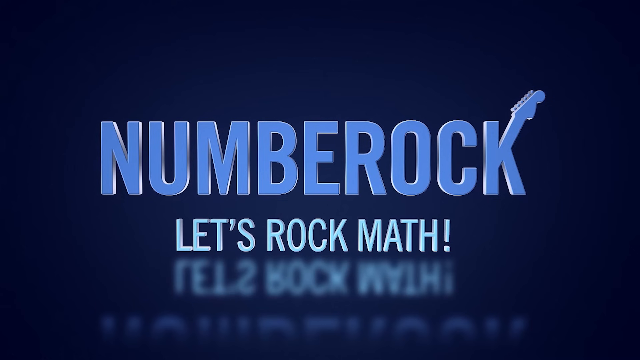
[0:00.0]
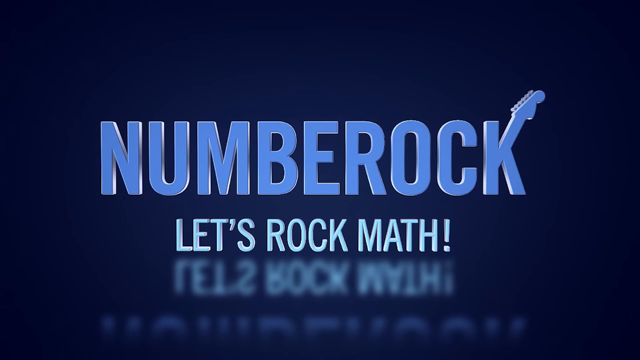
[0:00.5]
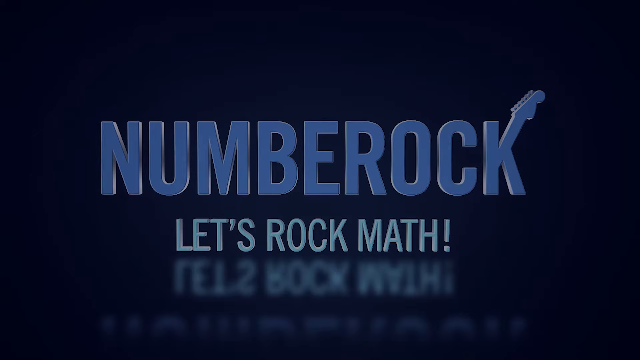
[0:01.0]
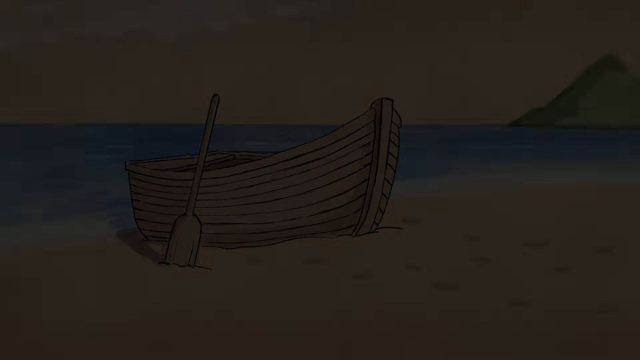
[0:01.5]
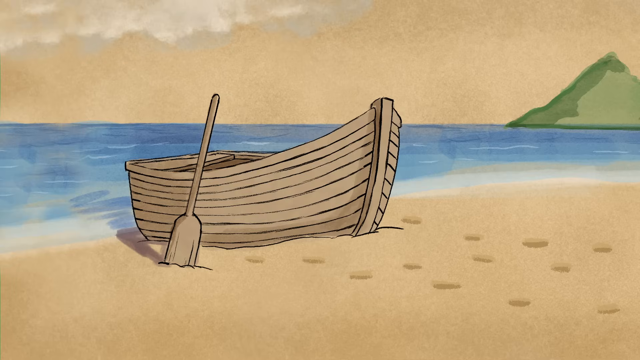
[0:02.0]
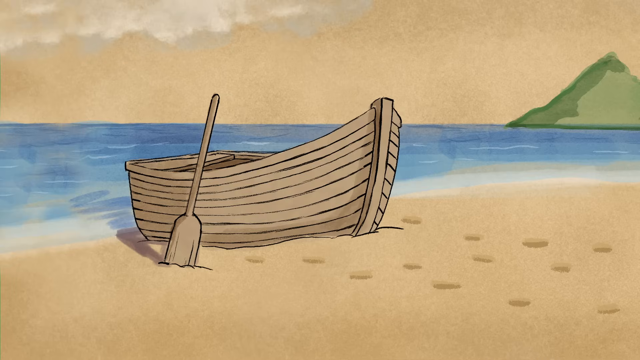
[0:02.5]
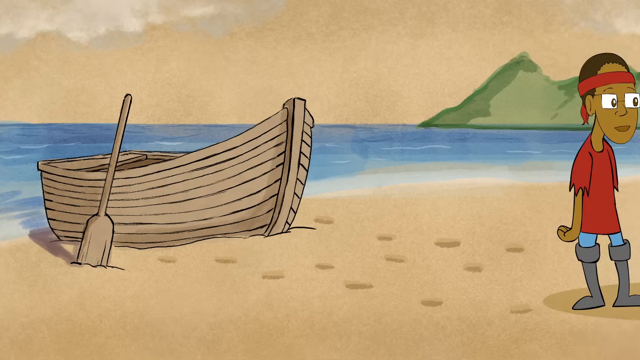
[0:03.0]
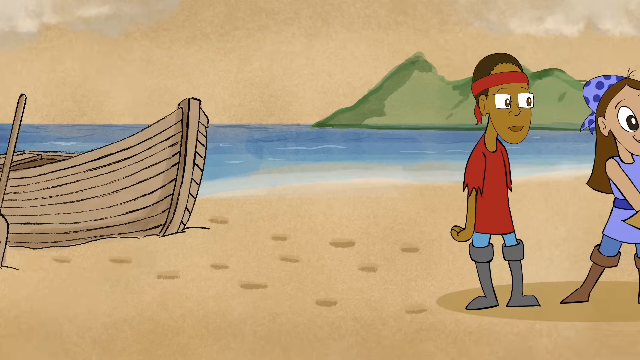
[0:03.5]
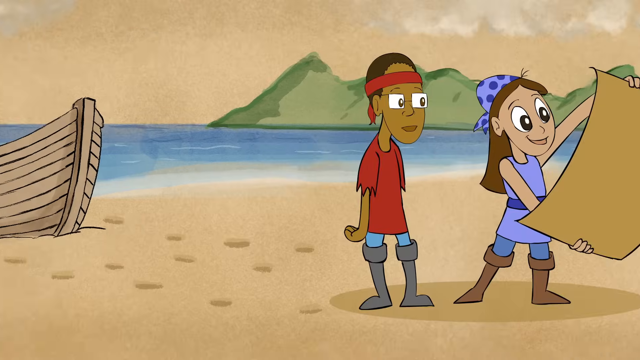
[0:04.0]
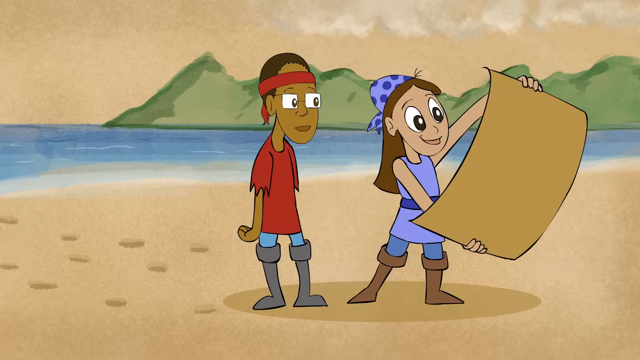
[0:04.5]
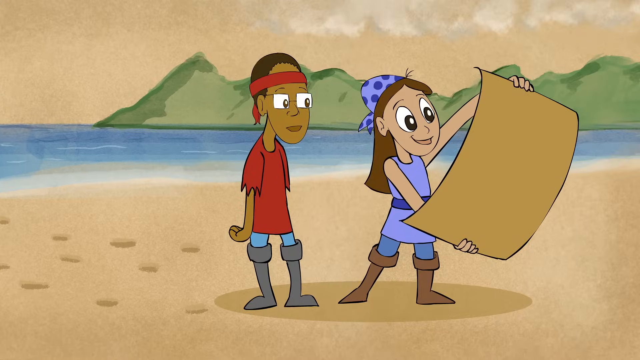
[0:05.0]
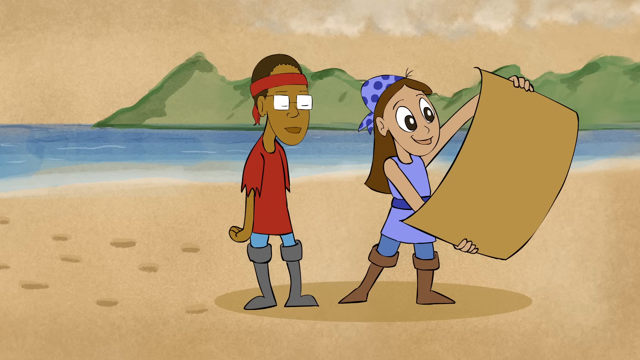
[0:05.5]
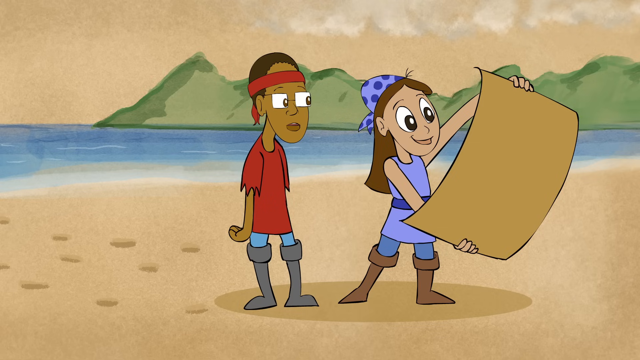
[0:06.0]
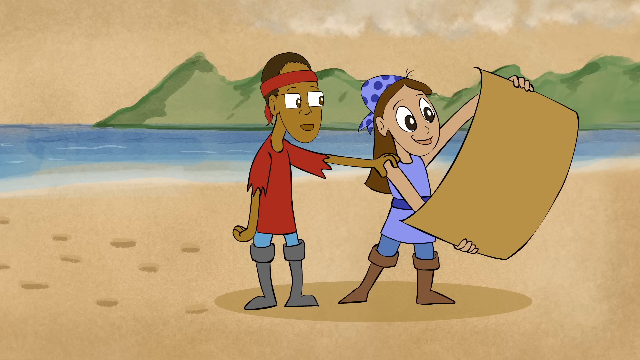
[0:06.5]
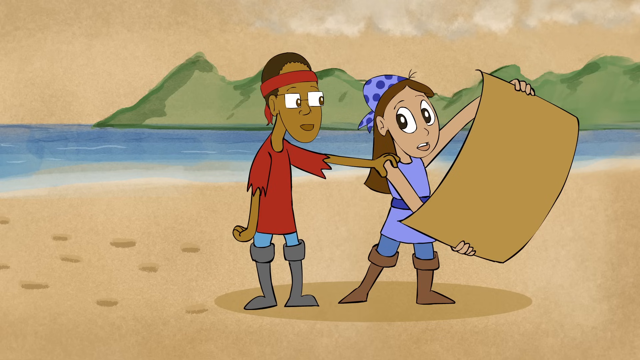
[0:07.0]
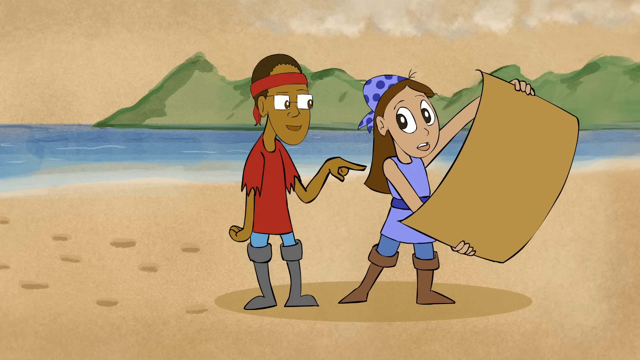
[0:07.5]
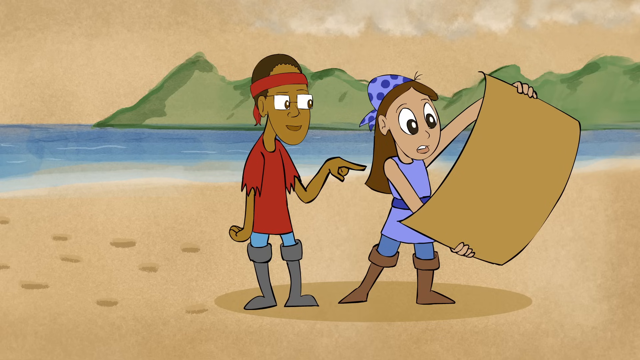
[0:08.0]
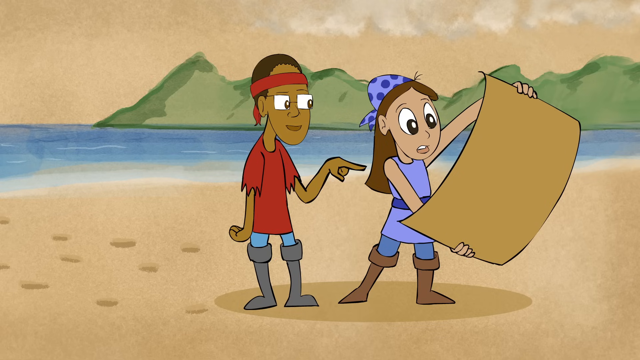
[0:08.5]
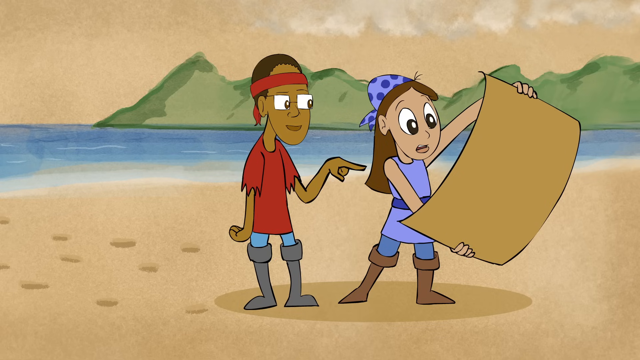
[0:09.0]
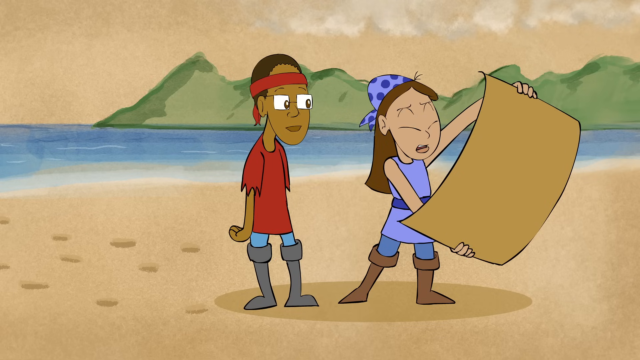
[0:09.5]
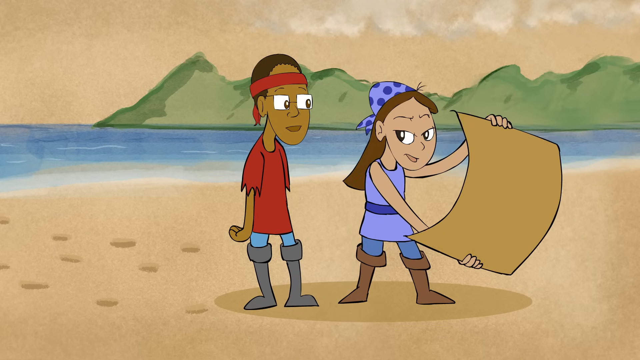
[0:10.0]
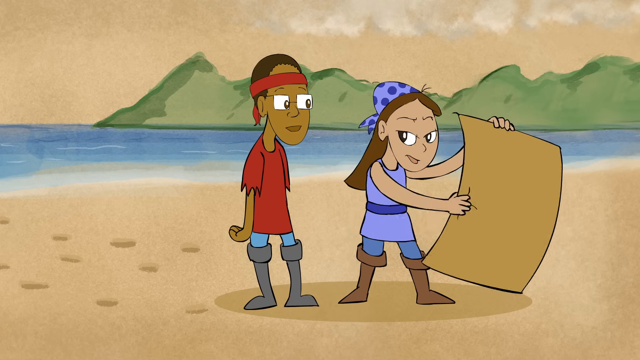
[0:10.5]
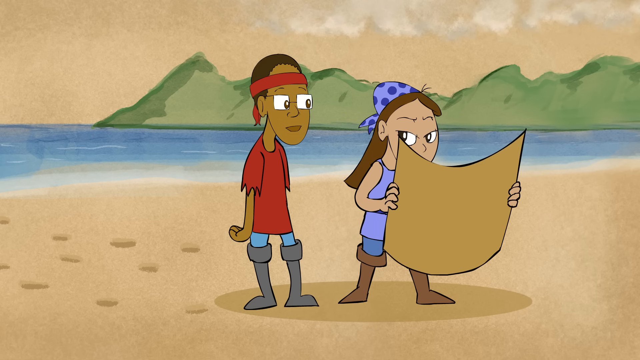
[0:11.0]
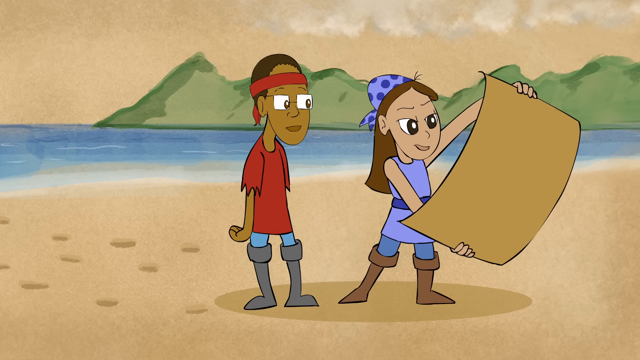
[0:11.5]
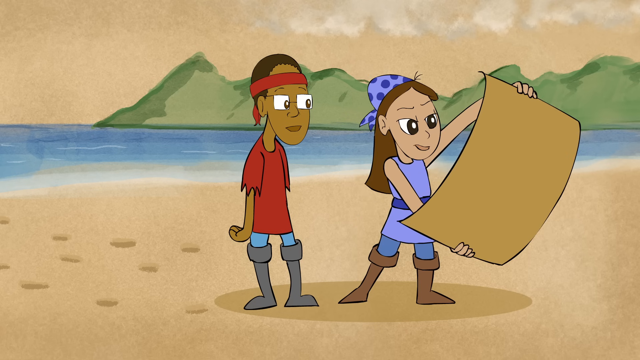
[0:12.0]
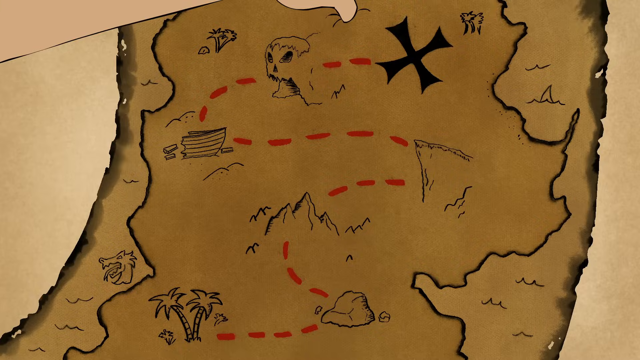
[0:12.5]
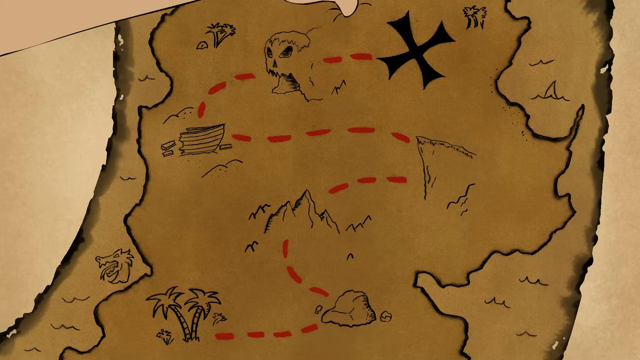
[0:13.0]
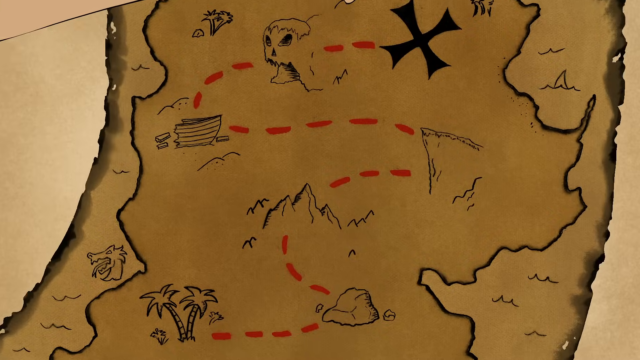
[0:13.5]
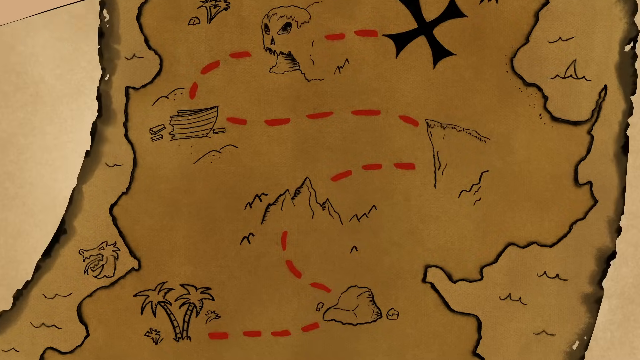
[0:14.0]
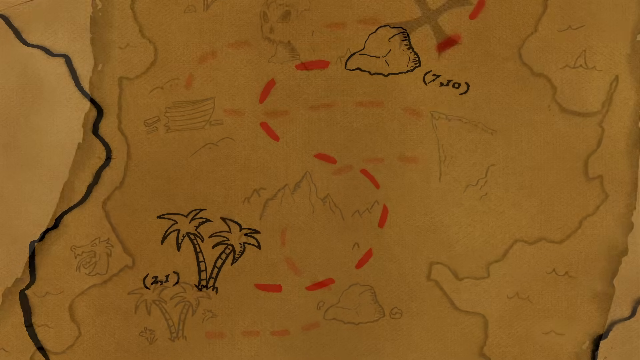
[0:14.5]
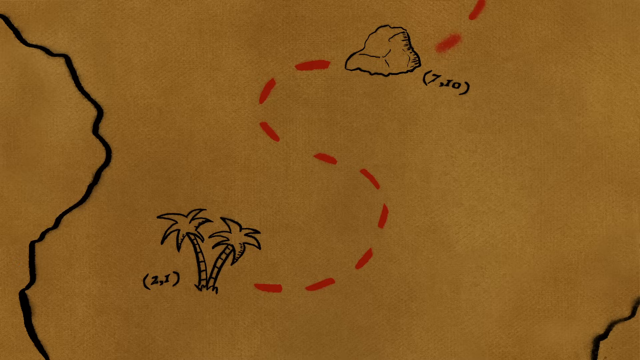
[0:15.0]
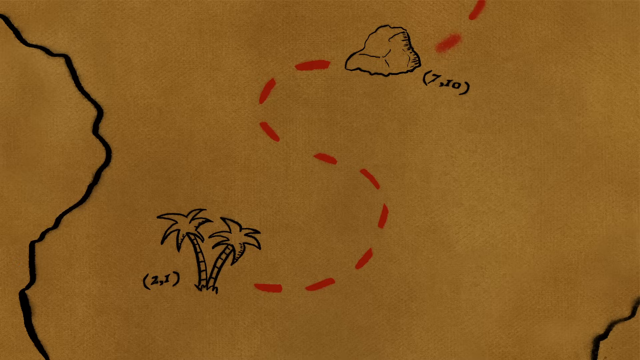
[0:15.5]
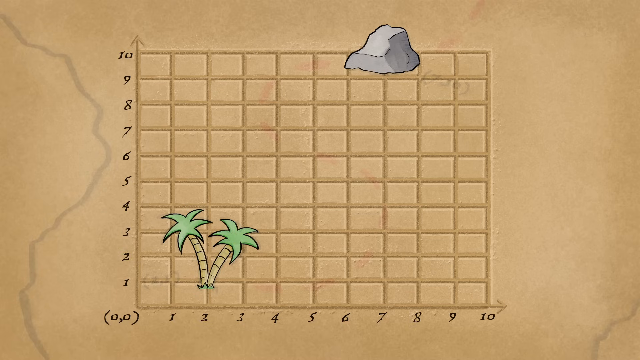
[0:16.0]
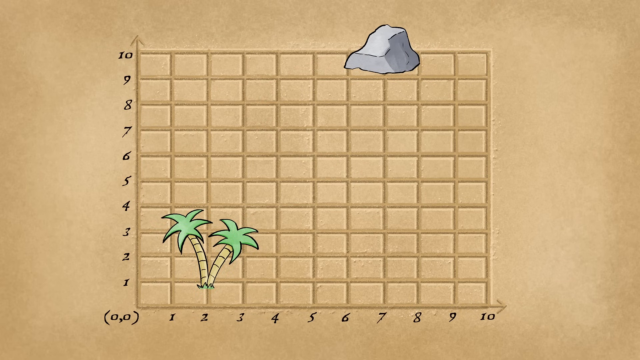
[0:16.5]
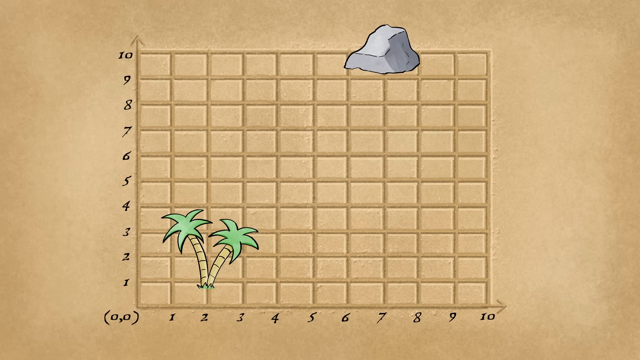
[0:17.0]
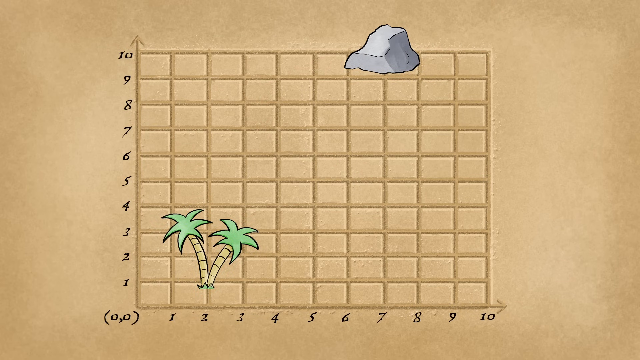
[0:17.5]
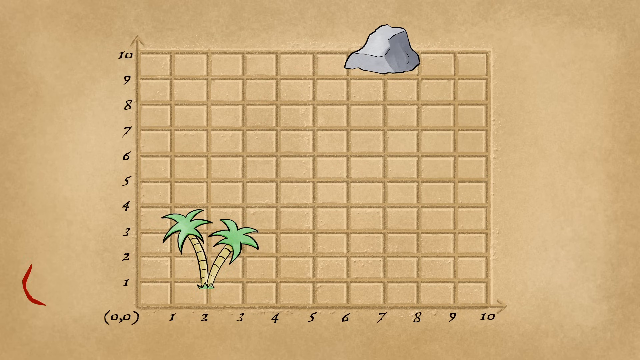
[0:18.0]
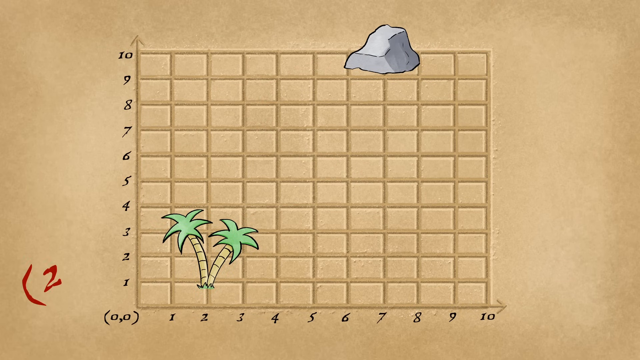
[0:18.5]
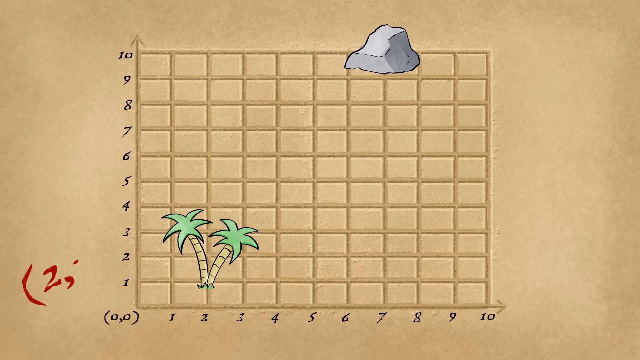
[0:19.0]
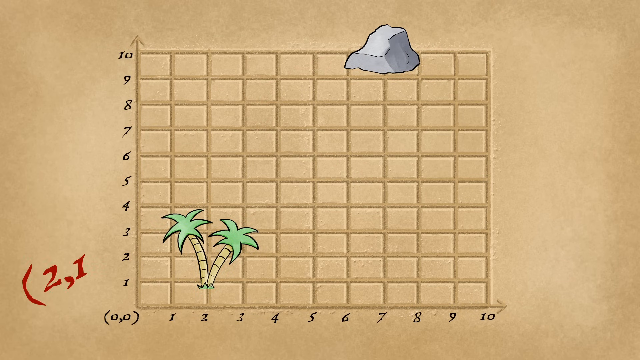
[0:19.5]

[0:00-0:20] Two children, a boy and a girl, appear; the girl is holding a map with instructions for finding something. The first page shows a number rock, followed by lips, a rock and a map. The video seems to be about mathematics. There is the sea, and the boy points something out to the girl while she is not looking at the map. There is an indicator and a path to be followed to reach the goal.